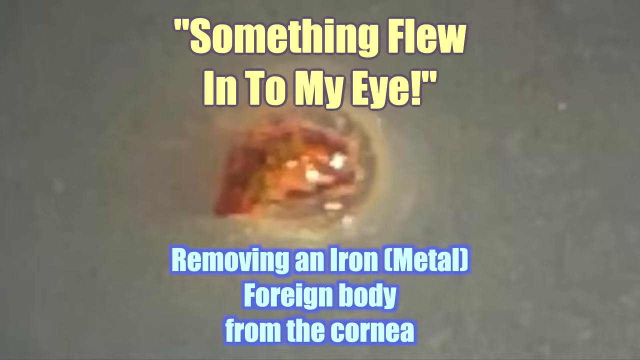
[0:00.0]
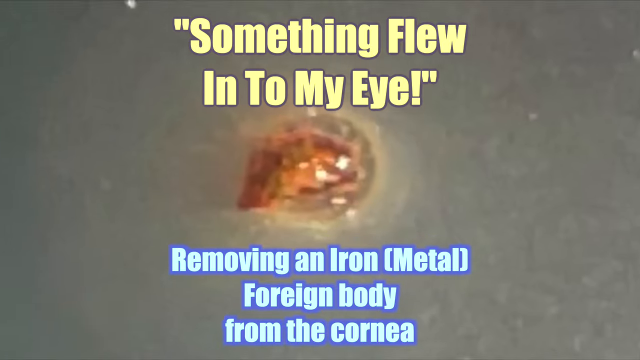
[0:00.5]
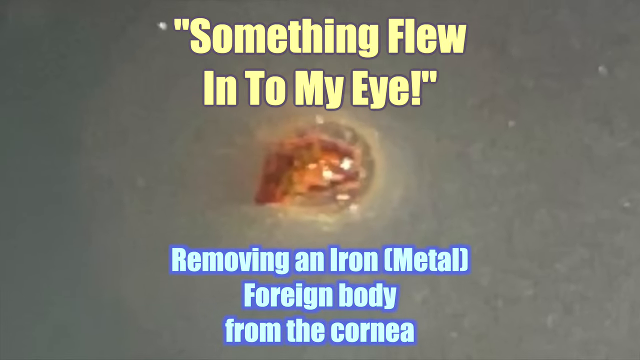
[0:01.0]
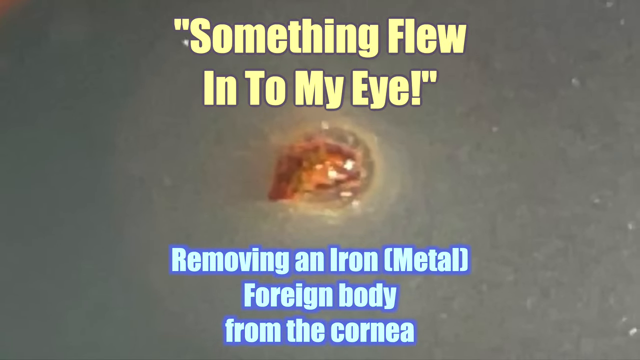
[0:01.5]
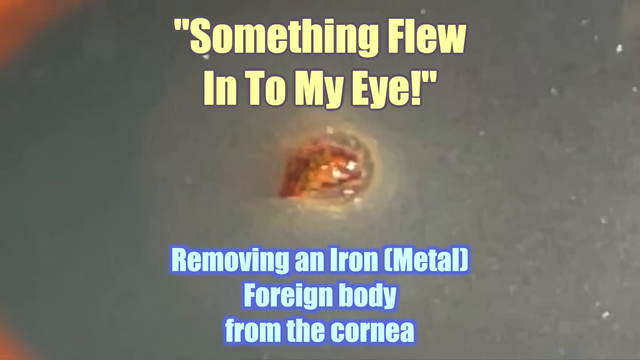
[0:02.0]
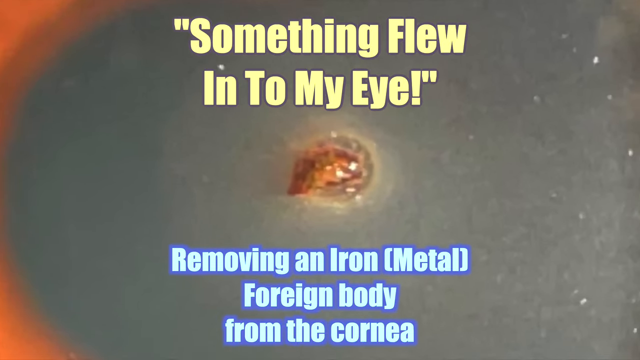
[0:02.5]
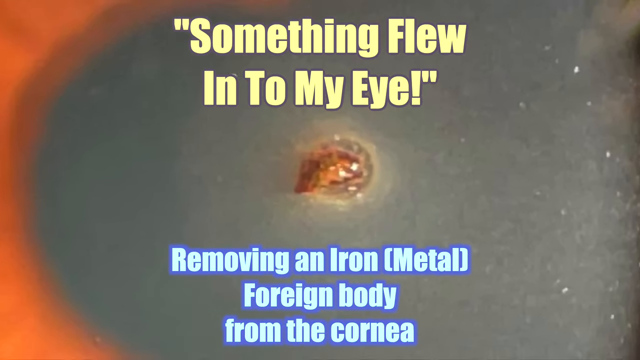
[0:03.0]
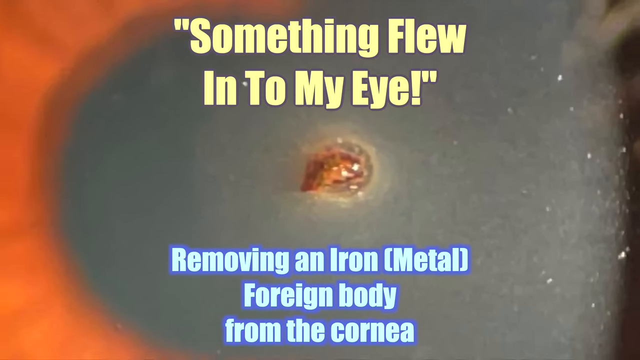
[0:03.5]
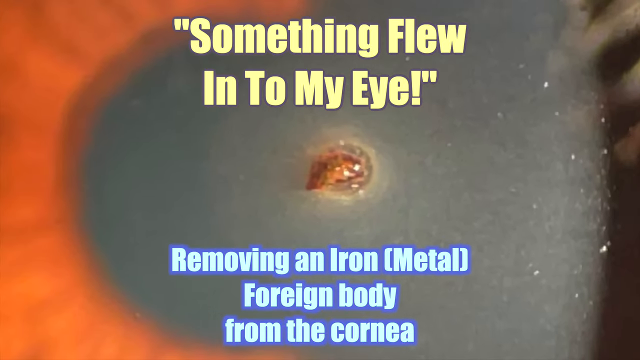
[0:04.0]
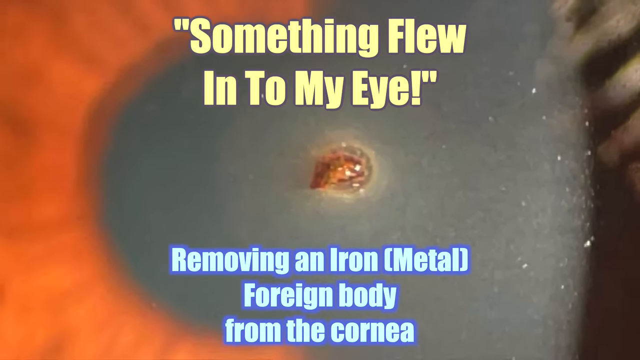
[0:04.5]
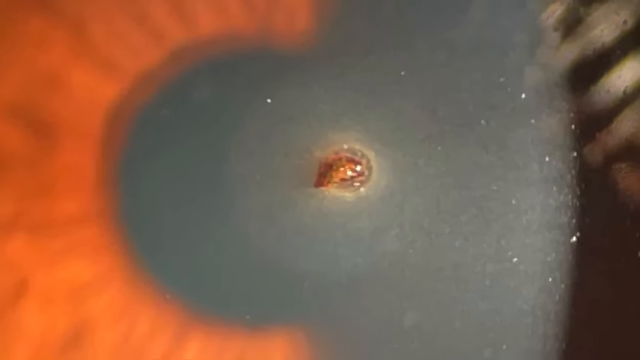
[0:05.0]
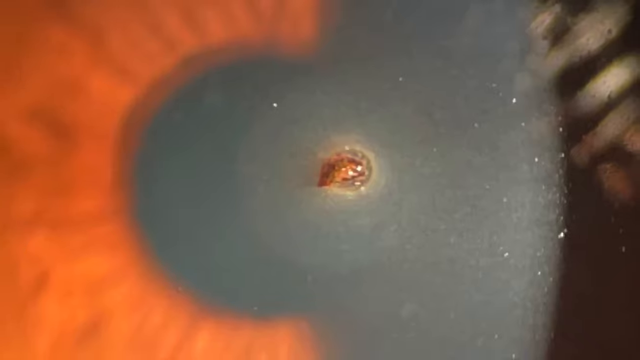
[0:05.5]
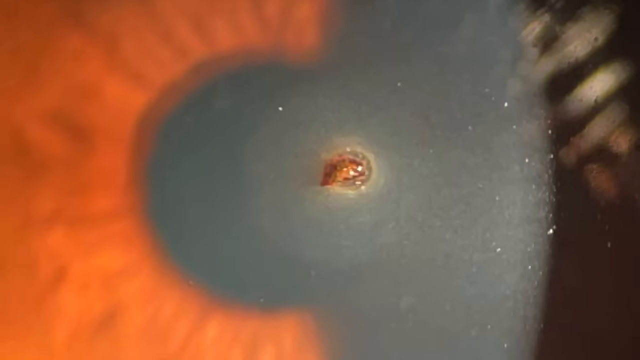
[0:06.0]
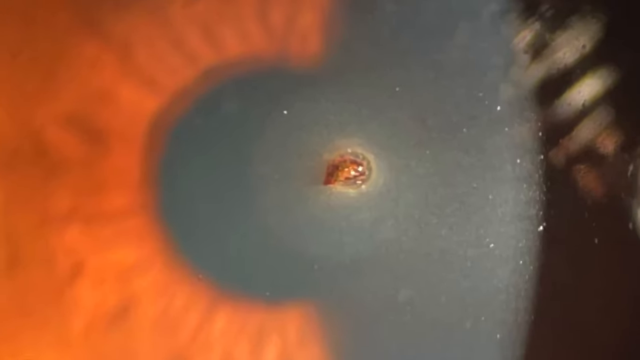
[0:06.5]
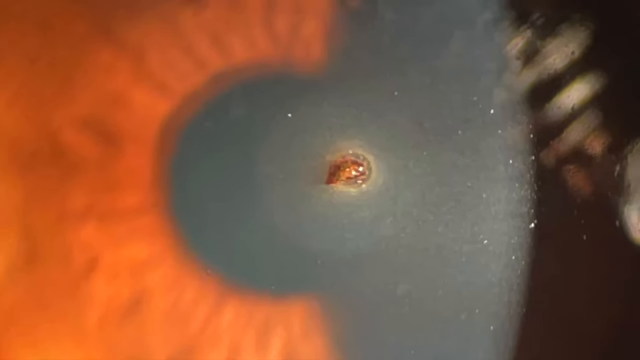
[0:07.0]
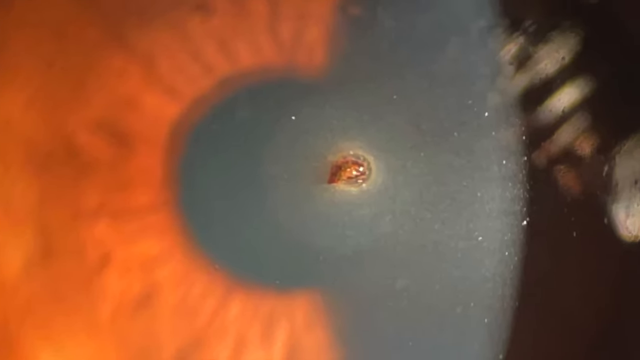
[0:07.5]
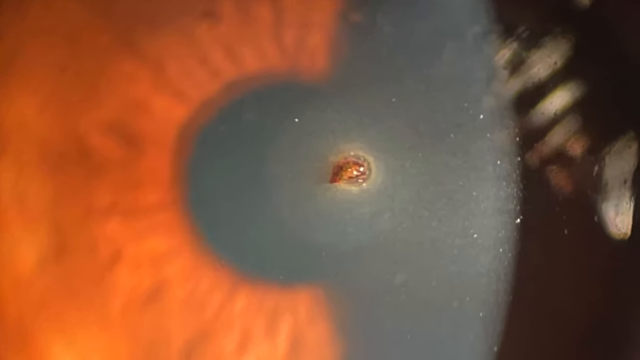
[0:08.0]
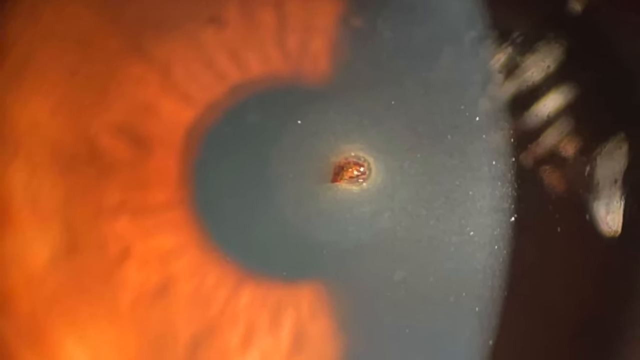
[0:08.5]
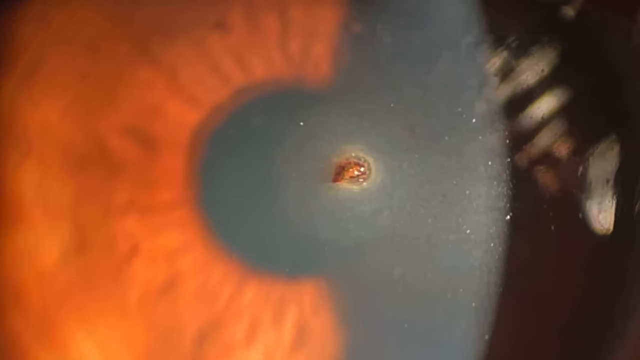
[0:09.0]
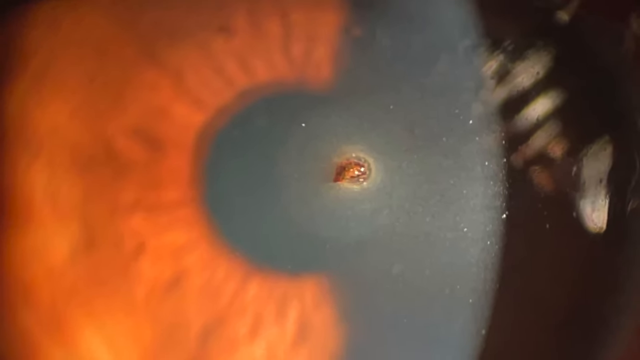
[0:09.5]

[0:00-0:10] Against a gray-black background, a title in all yellow reads "Something flew into my eye." Below it is an image of what appears to be a very zoomed-in, close-up picture of a human eye. Underneath that image, more titling in all blue font reads "Removing an iron metal formed body from the corona." The view zooms out of the image to show the entire eye, along with the object lodged in it, which appears to be a small metal foreign object lodged in the corona of the eye. As it zooms out, different aspects of the eye are visible, as is the shadowing around the foreign object.